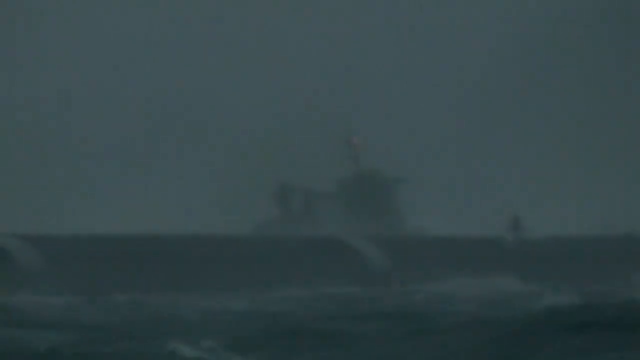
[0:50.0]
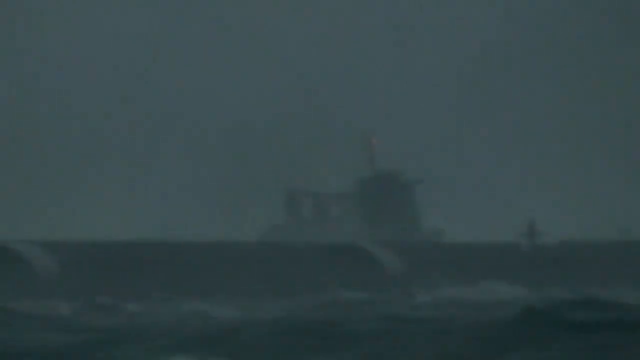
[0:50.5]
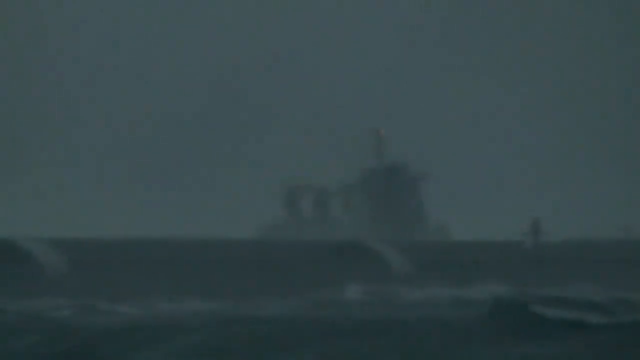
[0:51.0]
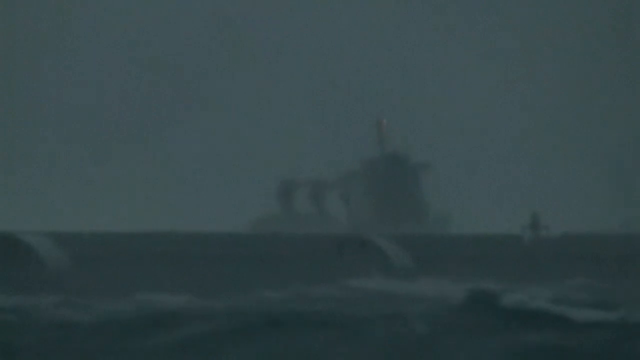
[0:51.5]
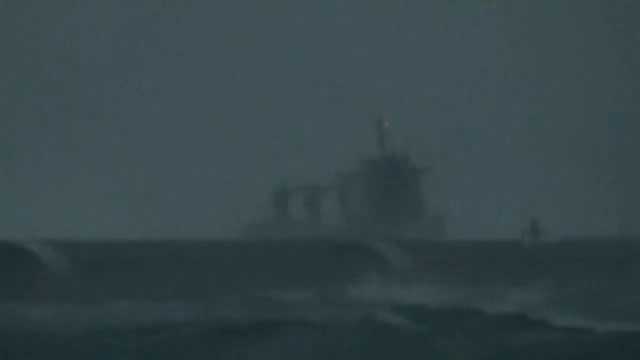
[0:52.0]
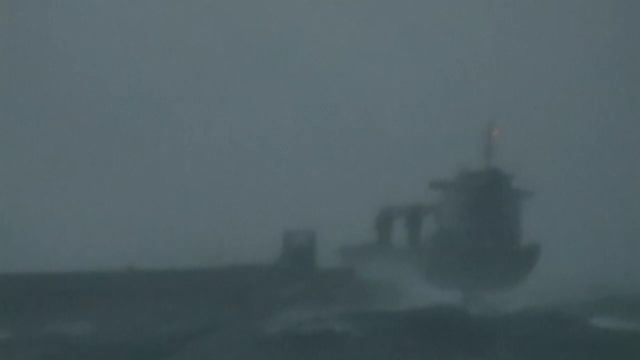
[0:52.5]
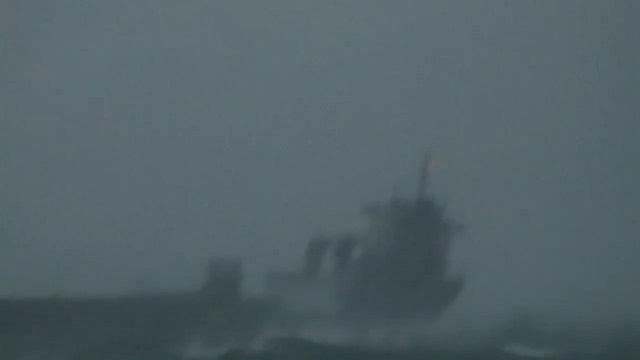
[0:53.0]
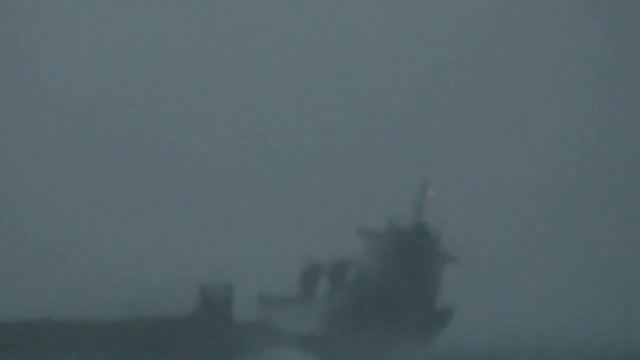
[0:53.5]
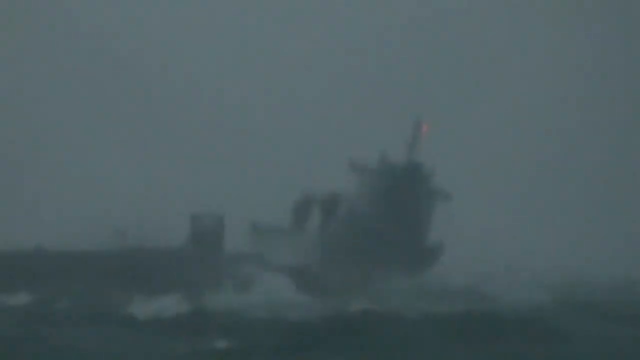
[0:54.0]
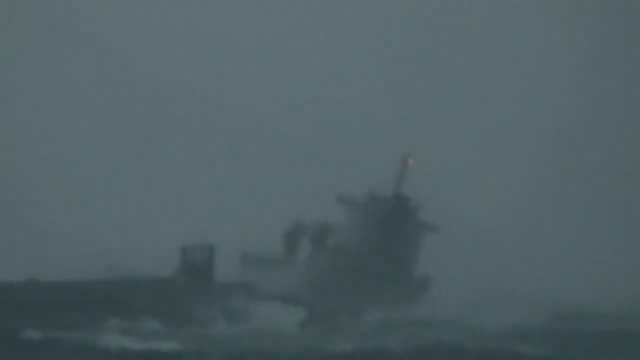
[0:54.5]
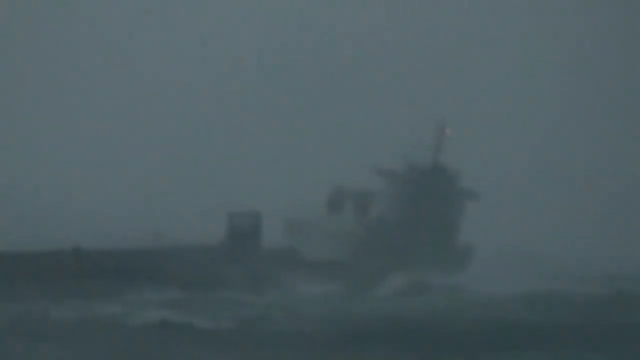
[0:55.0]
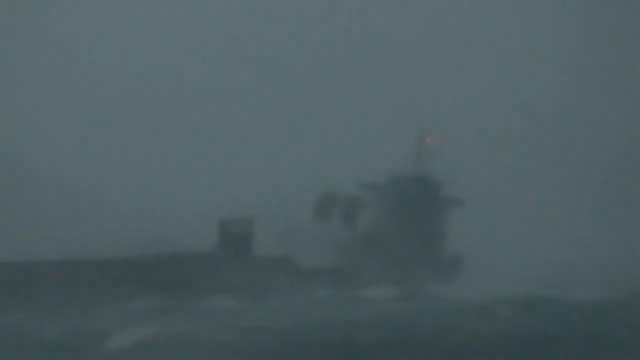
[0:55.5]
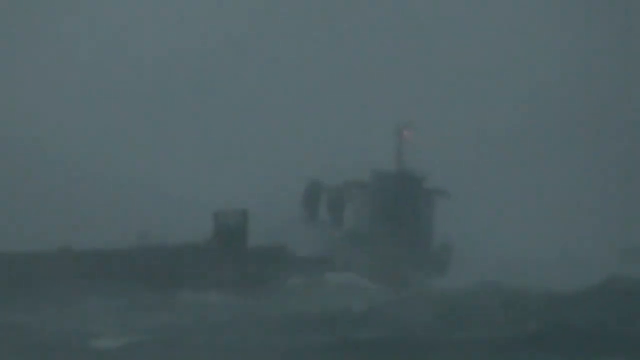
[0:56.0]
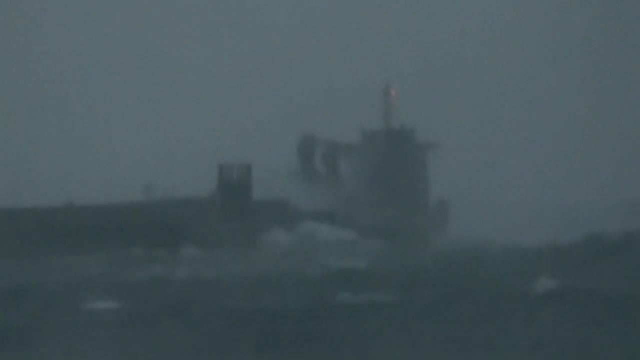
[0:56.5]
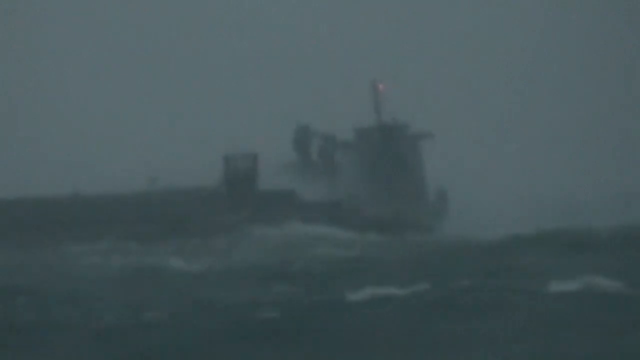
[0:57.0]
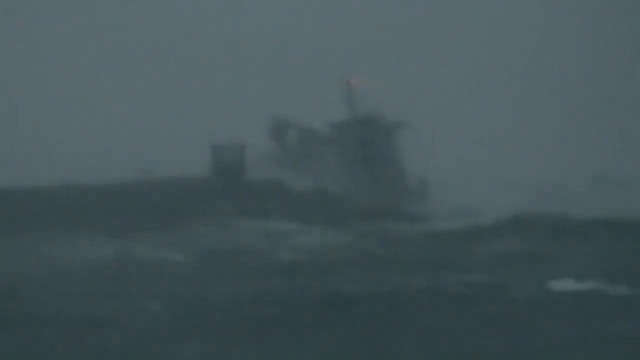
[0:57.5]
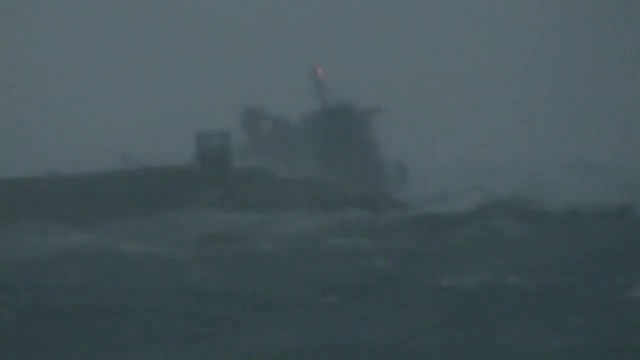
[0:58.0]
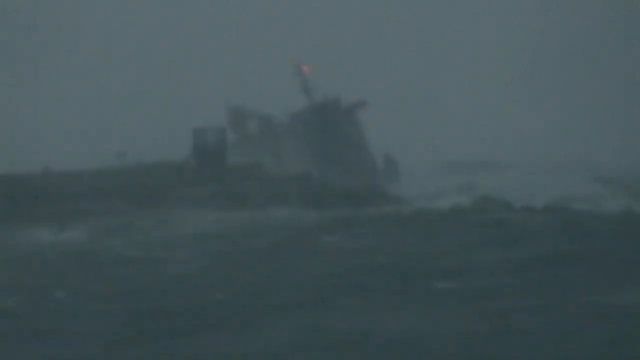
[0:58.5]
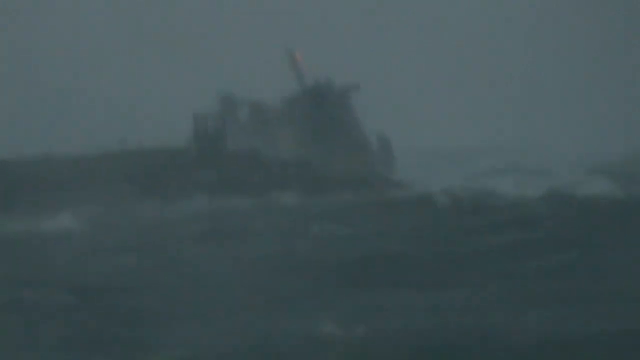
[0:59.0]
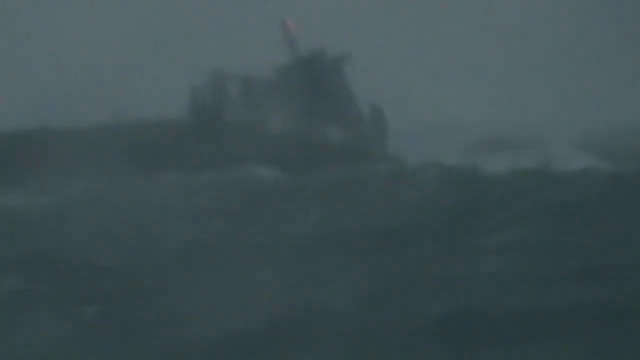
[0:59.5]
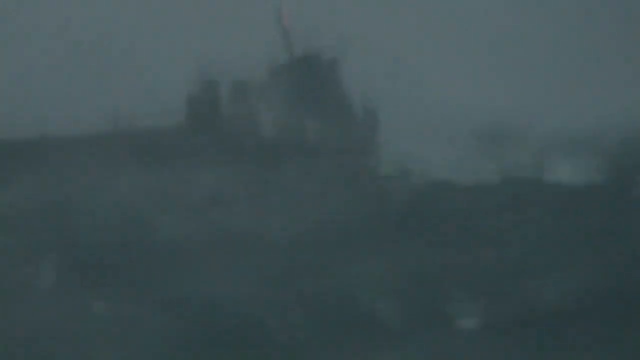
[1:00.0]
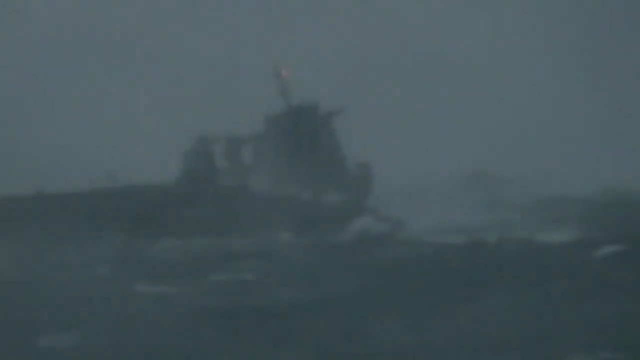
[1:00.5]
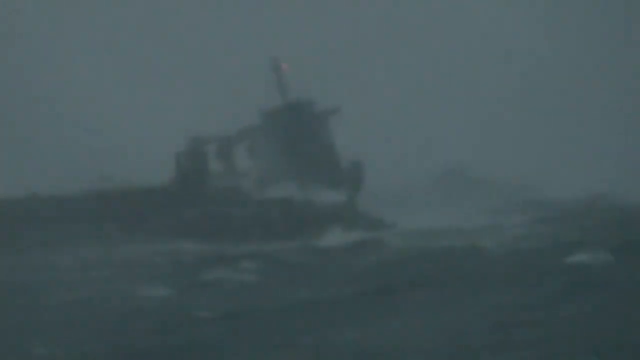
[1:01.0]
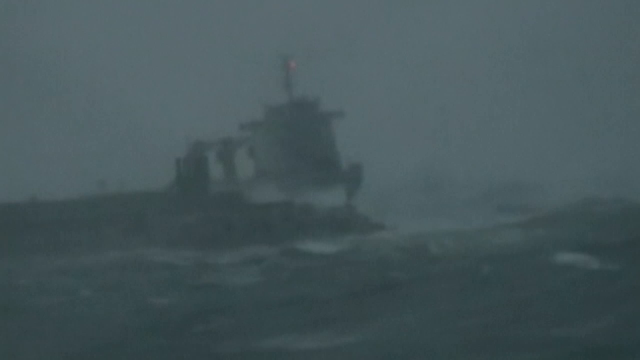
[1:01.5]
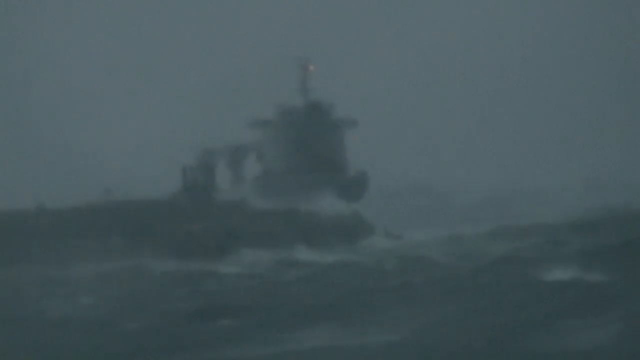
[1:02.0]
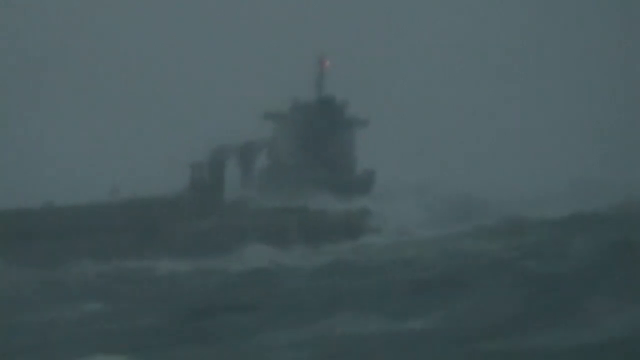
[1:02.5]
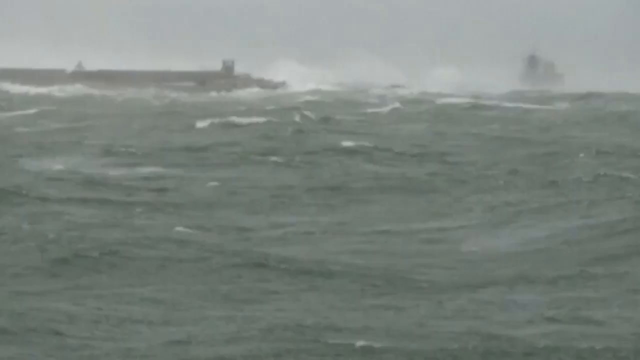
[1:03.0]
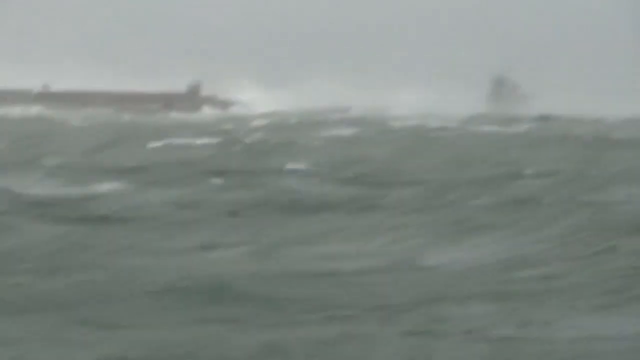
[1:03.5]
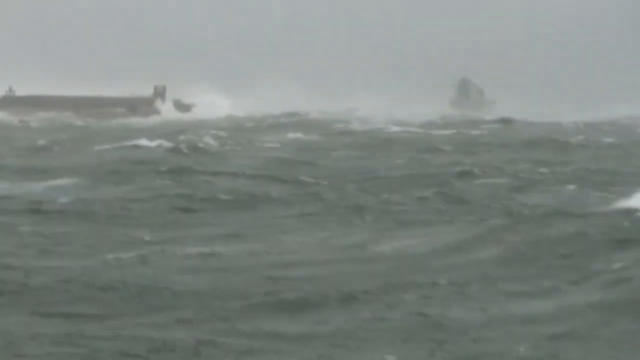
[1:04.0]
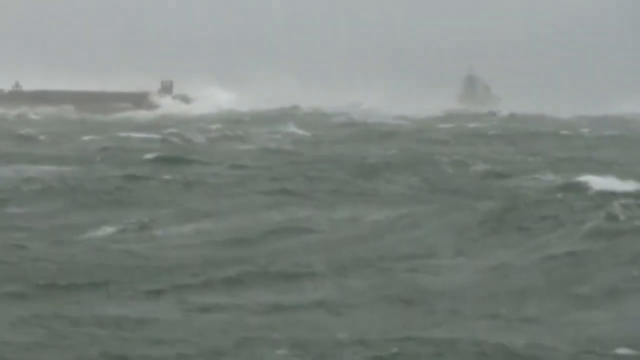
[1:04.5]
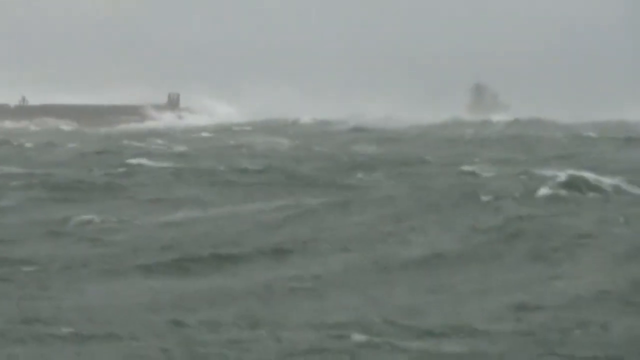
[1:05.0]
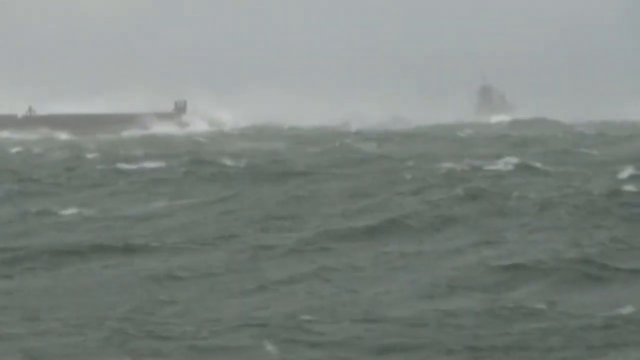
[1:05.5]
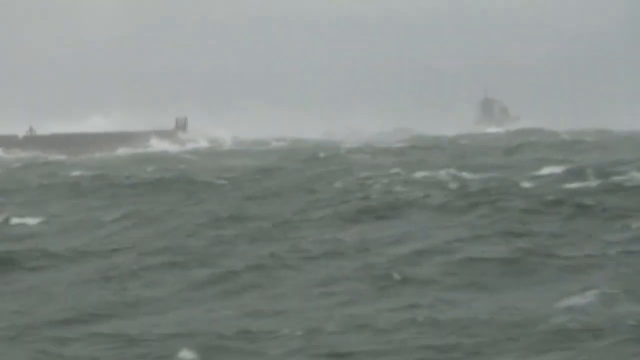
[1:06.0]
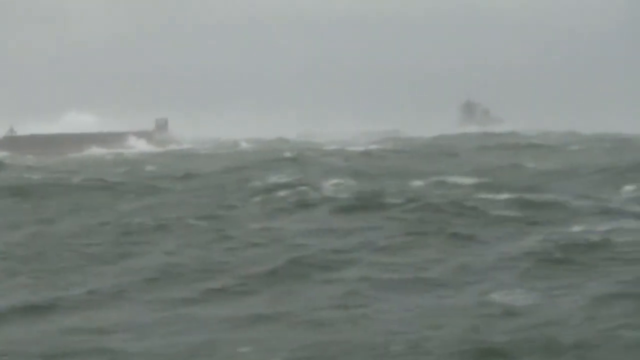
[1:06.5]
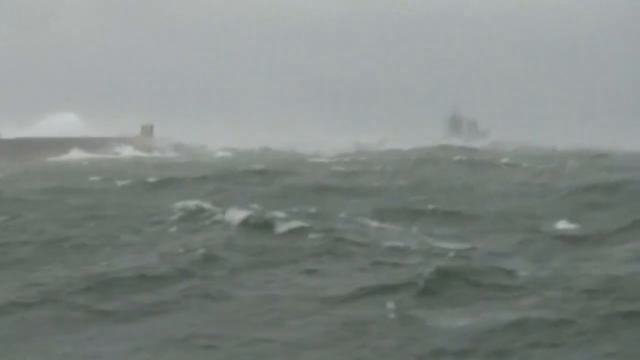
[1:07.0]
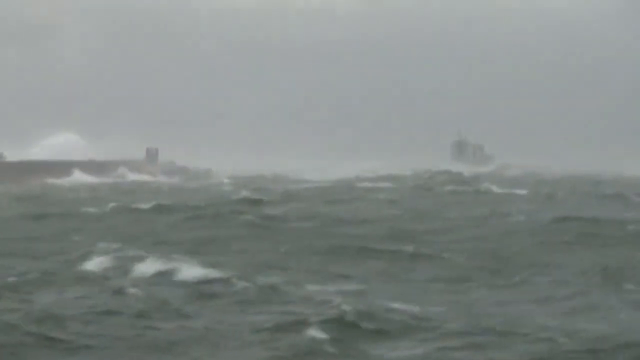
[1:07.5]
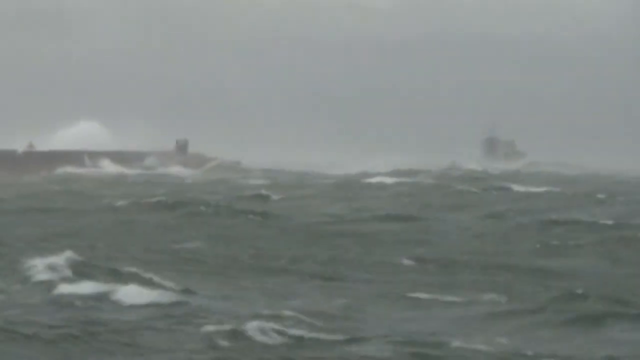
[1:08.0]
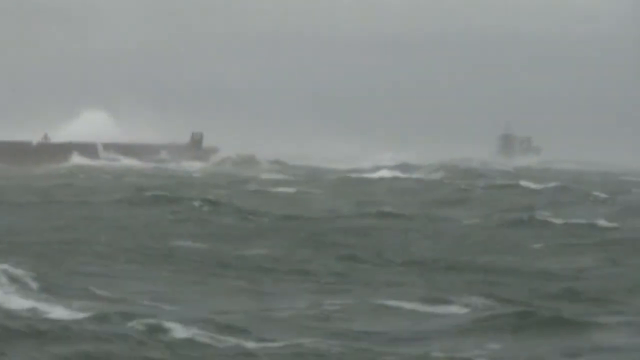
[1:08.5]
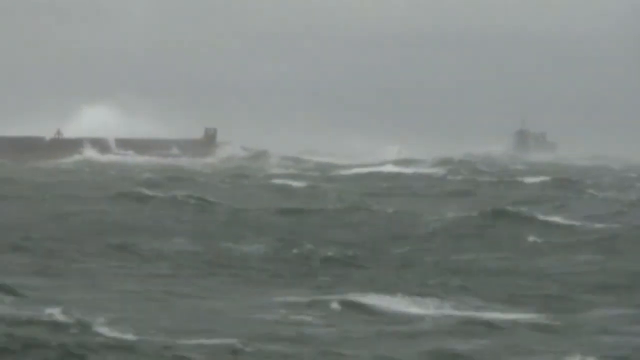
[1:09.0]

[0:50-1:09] The footage is very poor quality, sort of blurry and hard to see. A boat rocks back and forth in very choppy, heavy, rough waves. Then a lighter-colored ocean appears, also rough but not as rough as before. A pier and a boat are in the ocean, and a wave breaks over the pier, producing lots of white water. The water and the sky are gray. It is a very choppy ocean scene, with large boats being rocked back and forth by the surf, and there appears to be a storm happening.